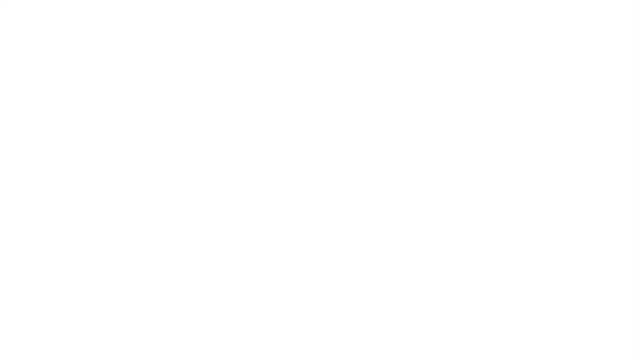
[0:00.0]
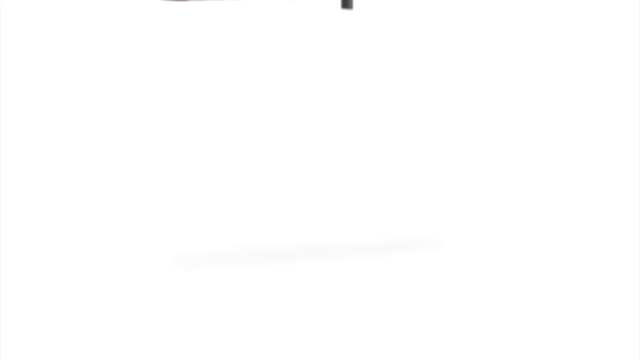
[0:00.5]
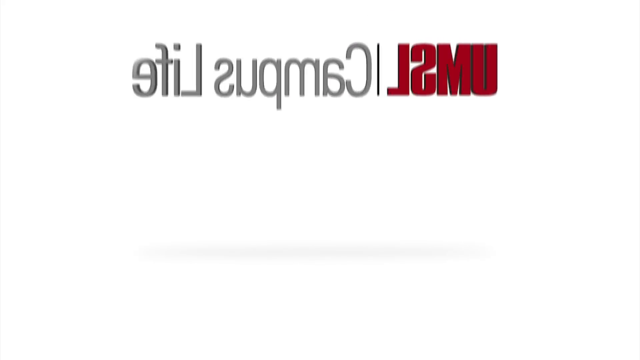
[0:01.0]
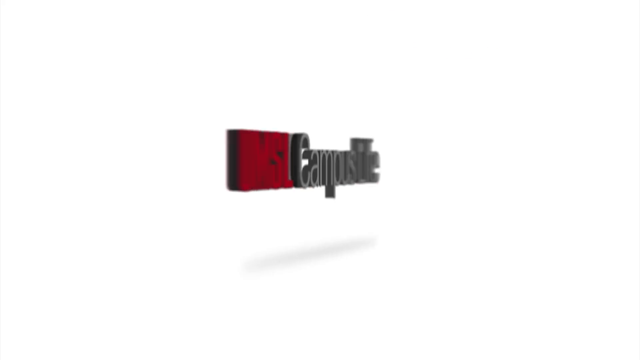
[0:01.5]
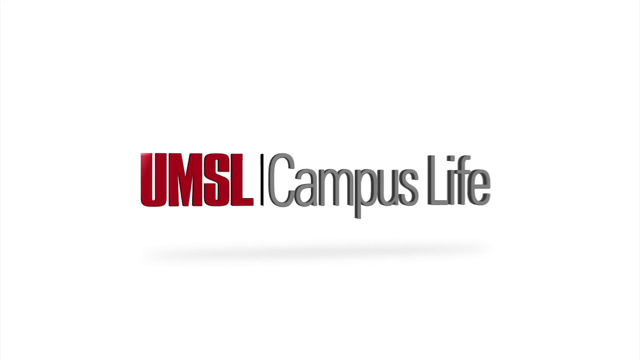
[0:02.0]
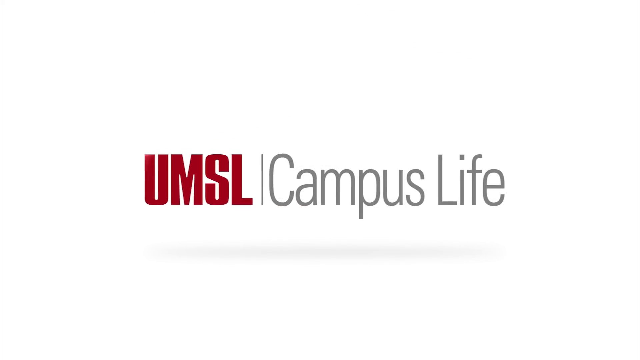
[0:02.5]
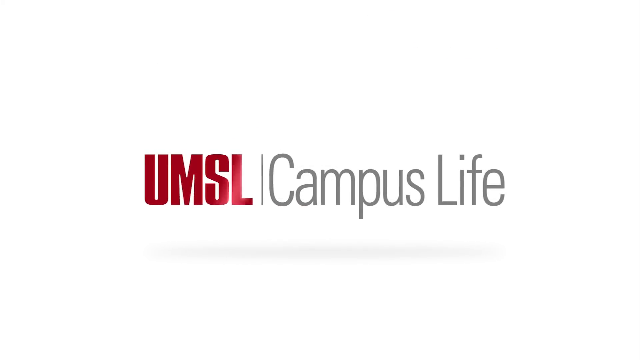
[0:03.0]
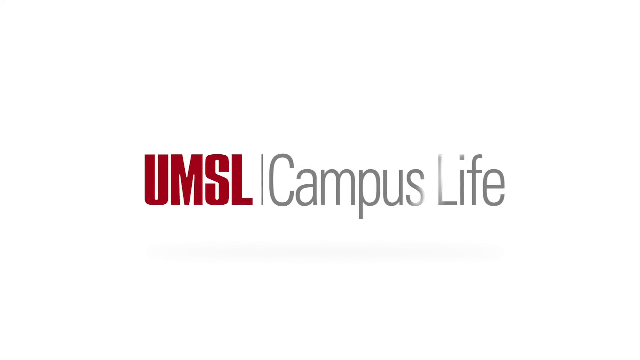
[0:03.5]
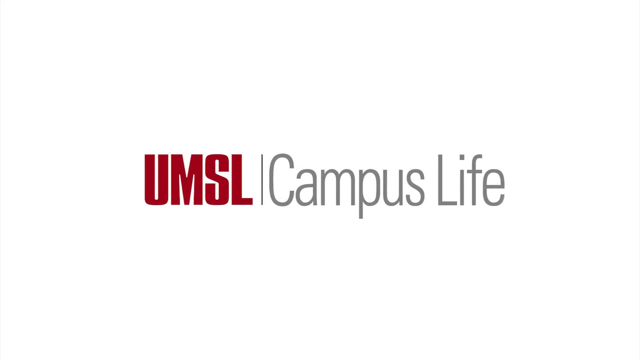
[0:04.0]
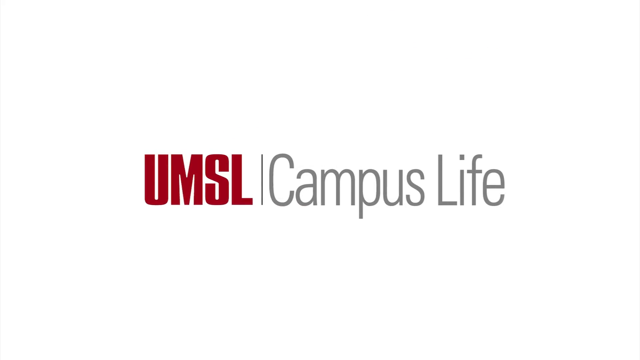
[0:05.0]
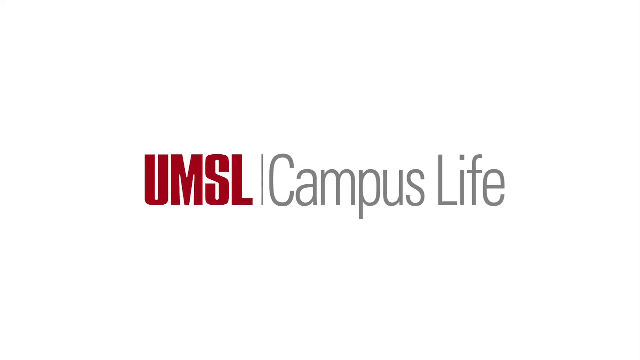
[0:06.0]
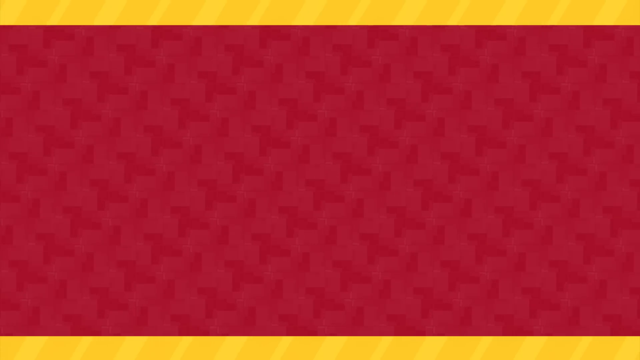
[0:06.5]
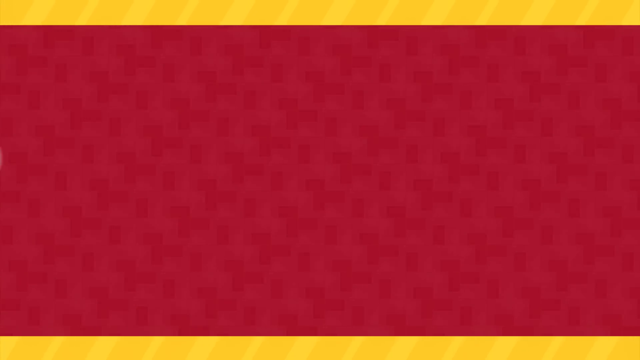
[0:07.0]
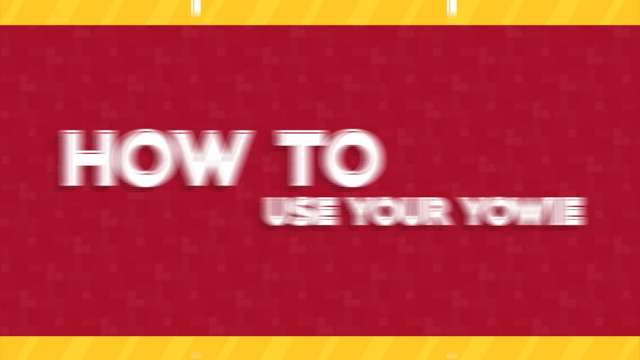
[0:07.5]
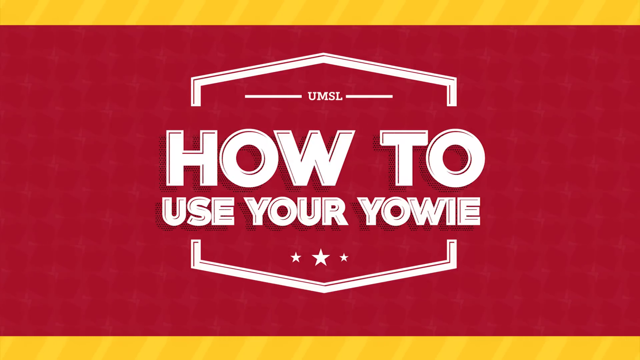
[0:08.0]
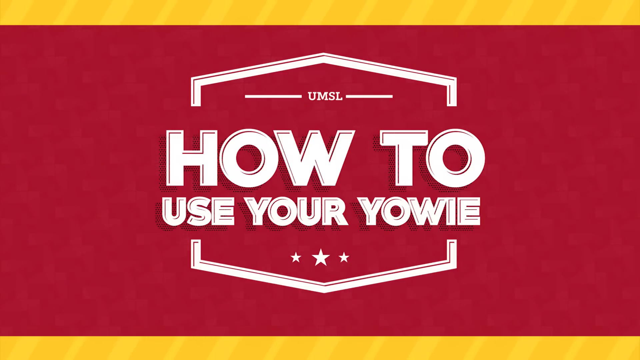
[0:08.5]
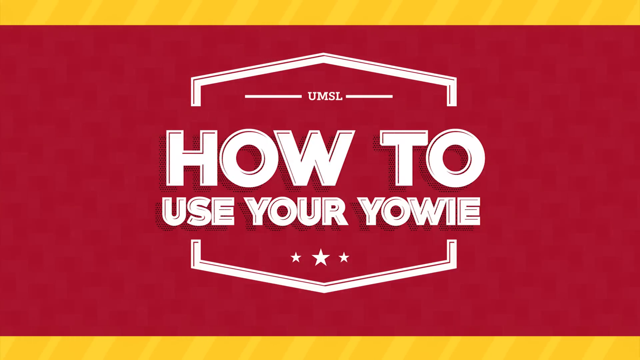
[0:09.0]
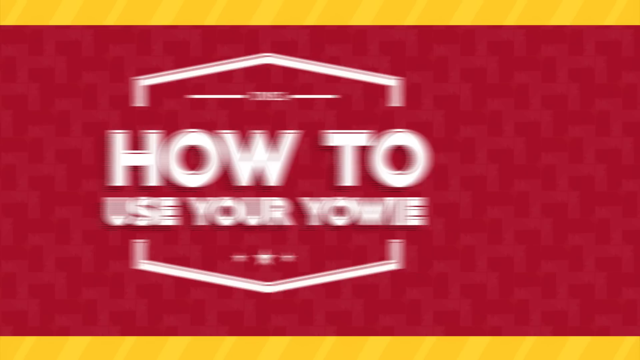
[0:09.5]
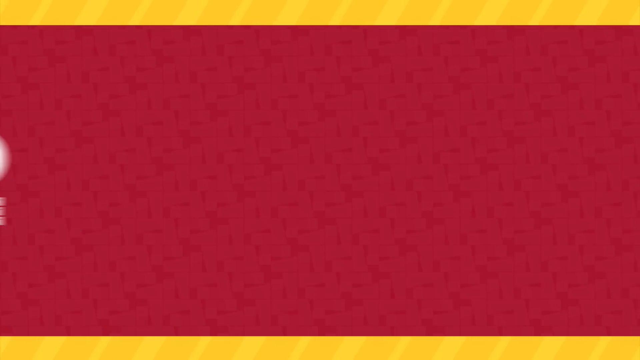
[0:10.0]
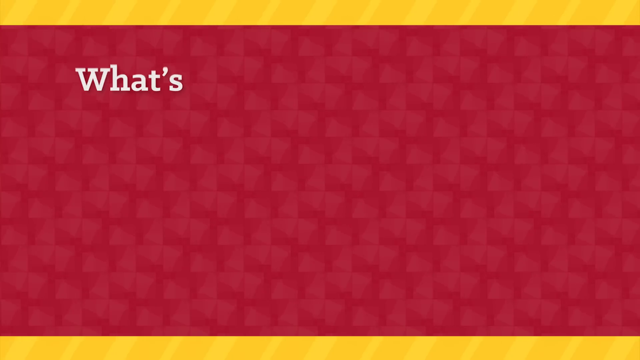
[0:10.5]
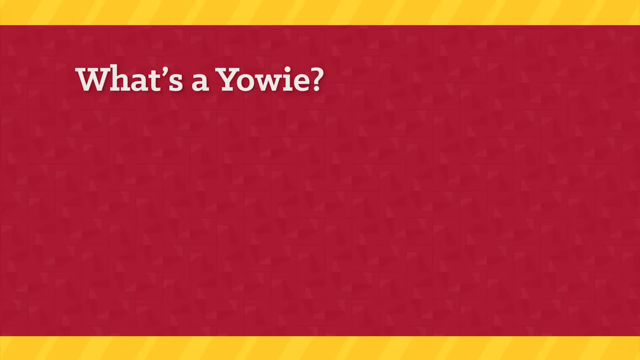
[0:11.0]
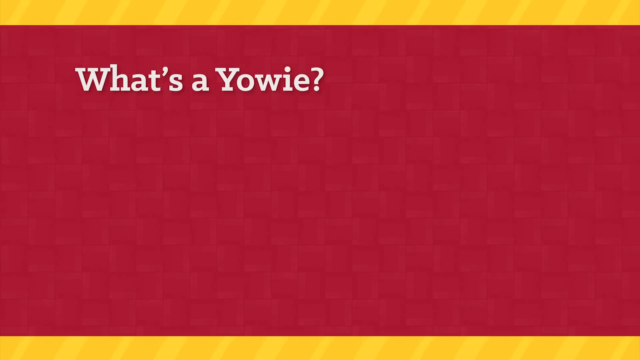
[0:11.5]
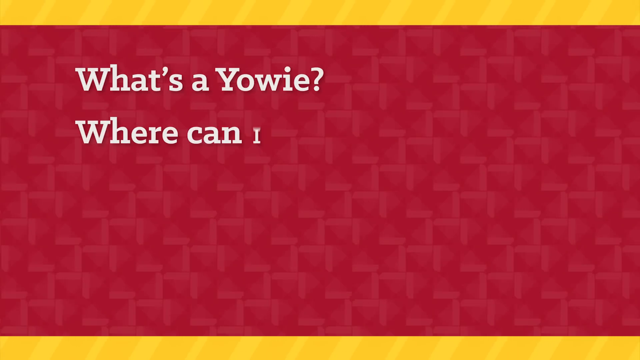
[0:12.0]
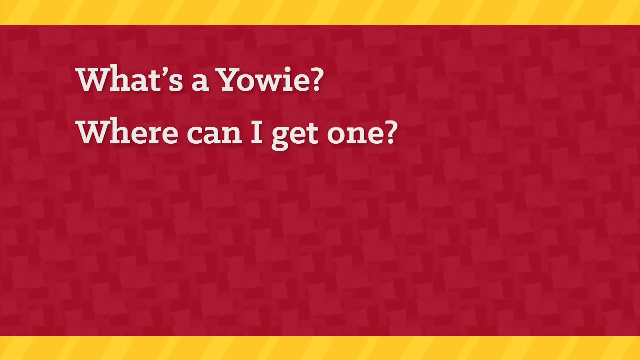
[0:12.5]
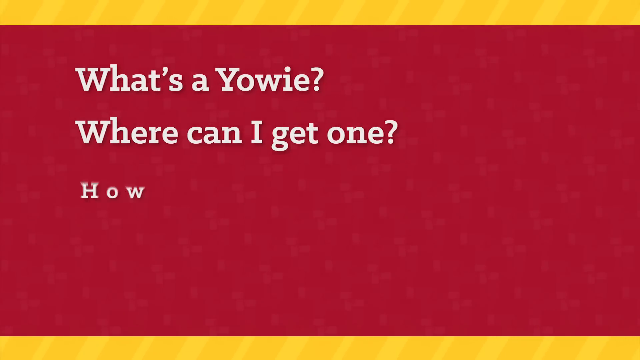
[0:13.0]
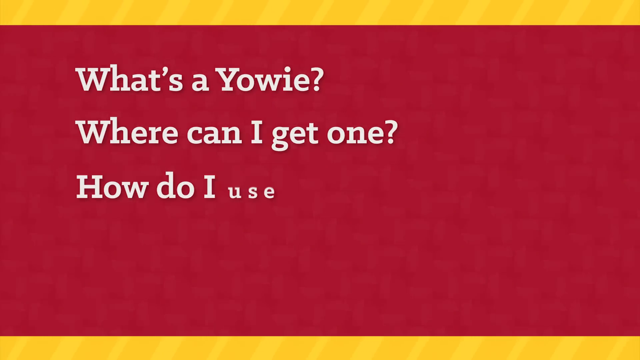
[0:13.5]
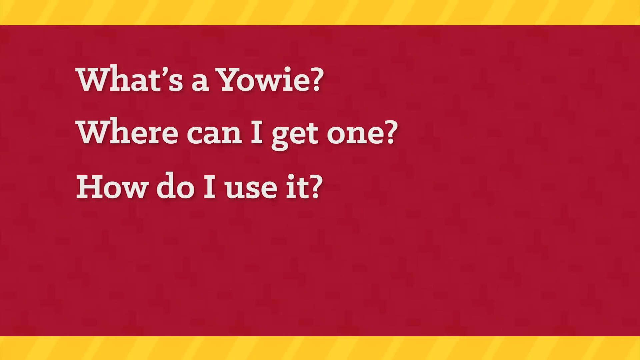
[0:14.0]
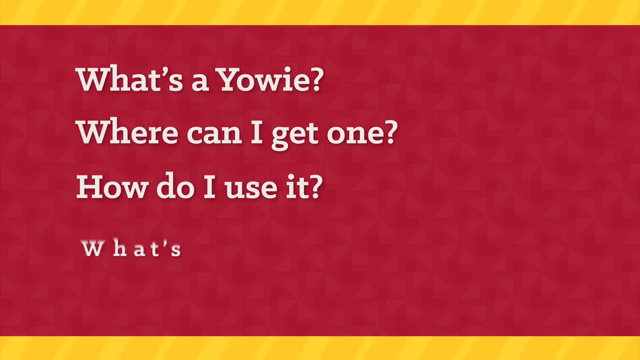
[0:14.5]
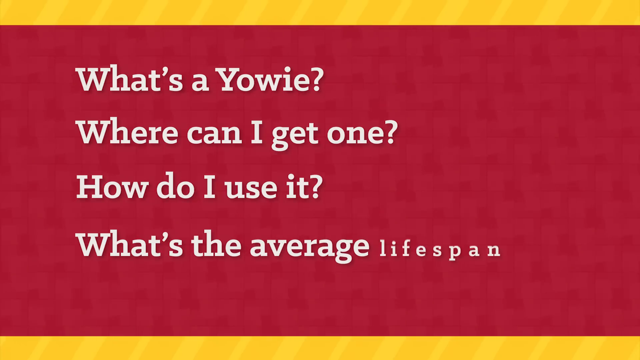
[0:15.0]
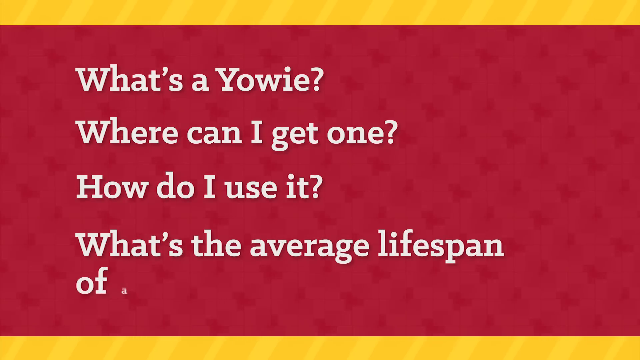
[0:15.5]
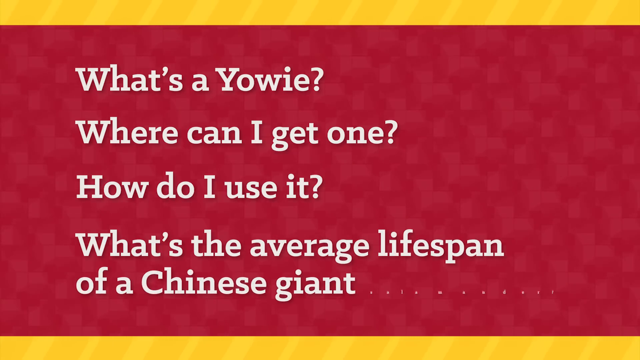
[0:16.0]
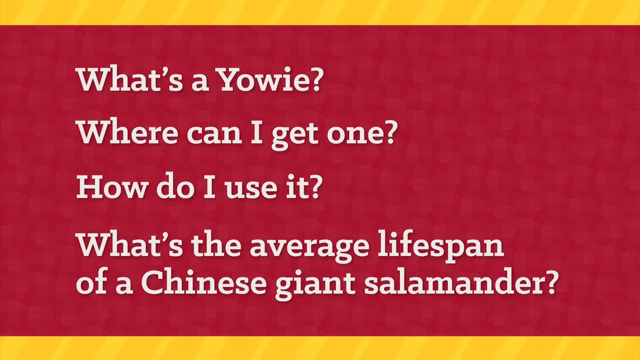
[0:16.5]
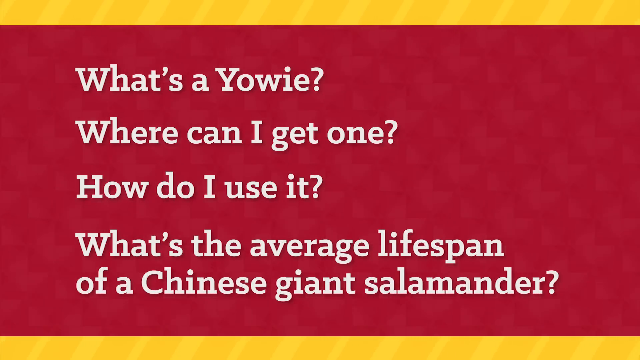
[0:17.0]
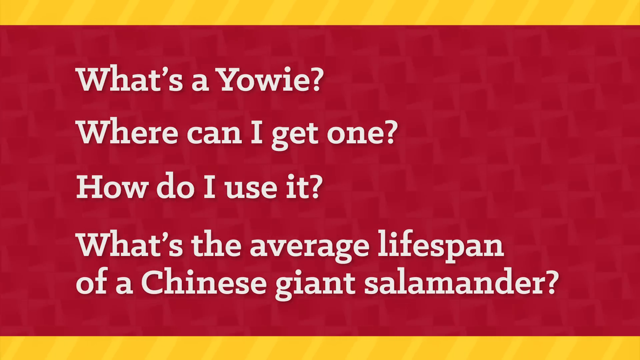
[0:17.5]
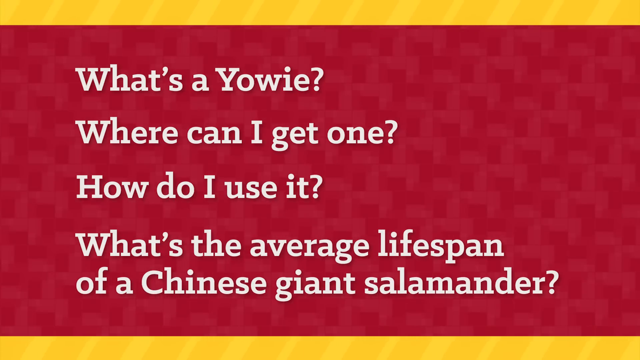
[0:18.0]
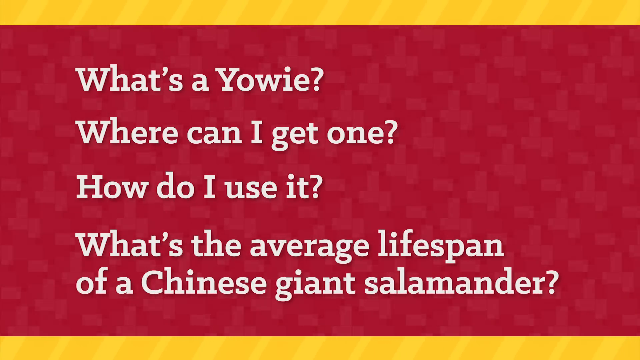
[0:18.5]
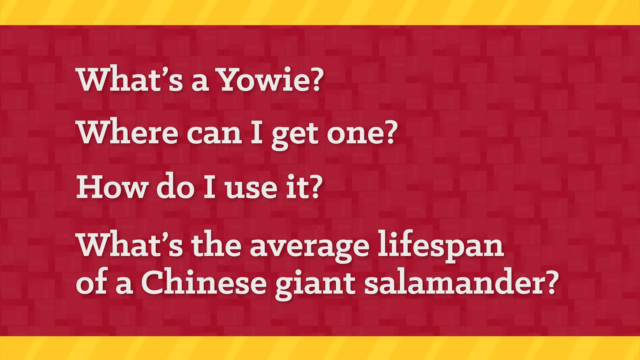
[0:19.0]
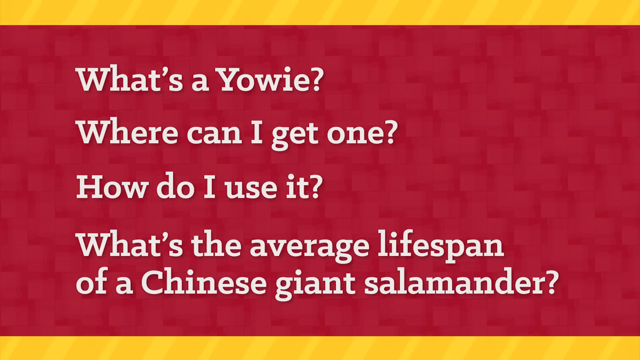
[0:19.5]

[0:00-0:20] The video opens on a white screen reading "UMSL campus life," with "UMSL" in maroon and "campus life" in gray. That text leaves the screen and a maroon screen with a yellow line across the top appears, reading "UMSL, how to use your yowie" in white. The screen changes to white text listing the questions "what is a yowie, where can I get one, how do I use it, what's the average life span of a Chinese giant salamander." It then goes to a white screen.